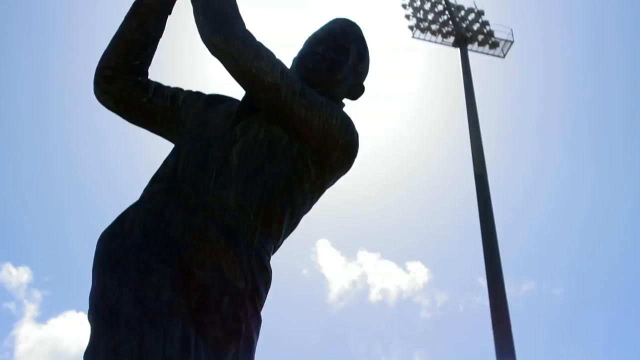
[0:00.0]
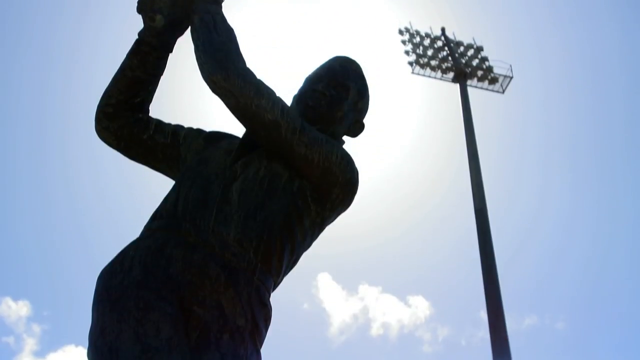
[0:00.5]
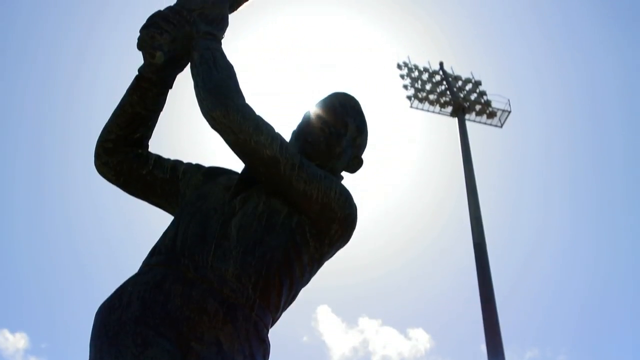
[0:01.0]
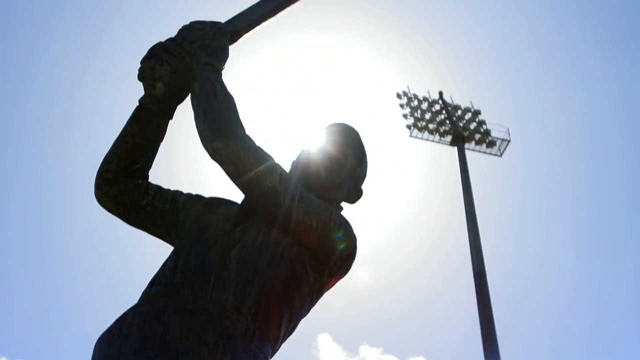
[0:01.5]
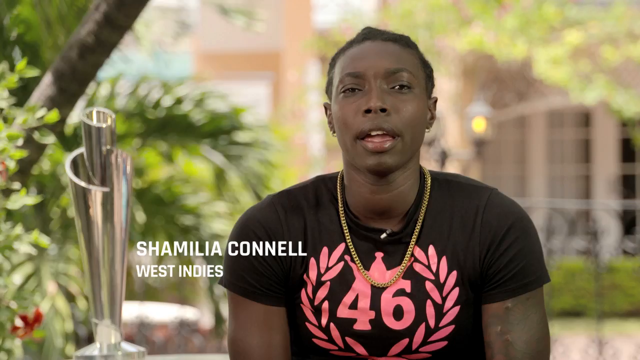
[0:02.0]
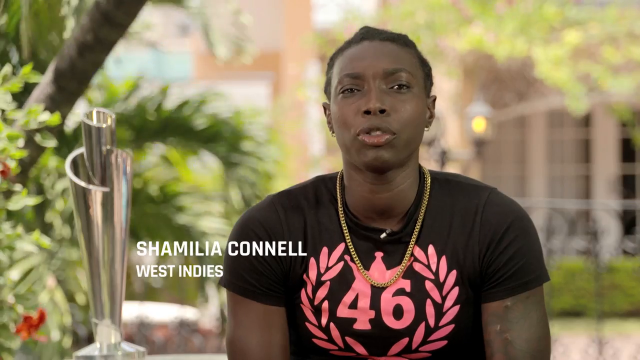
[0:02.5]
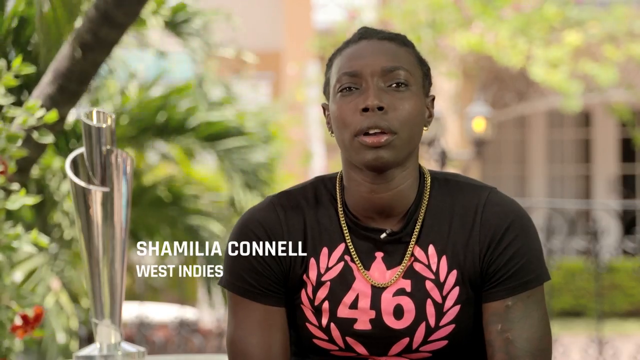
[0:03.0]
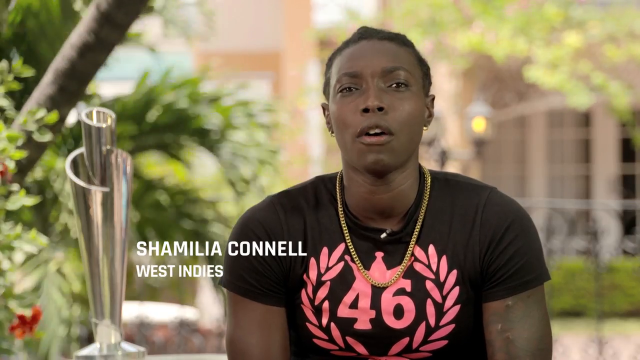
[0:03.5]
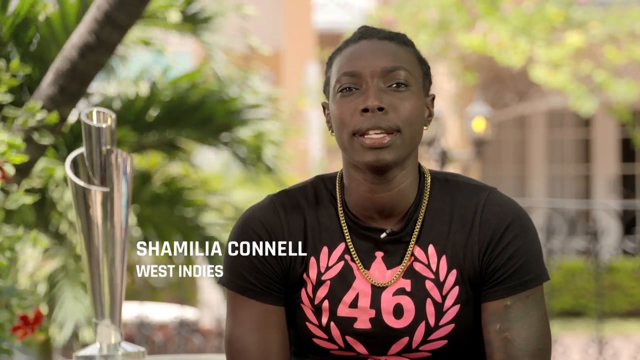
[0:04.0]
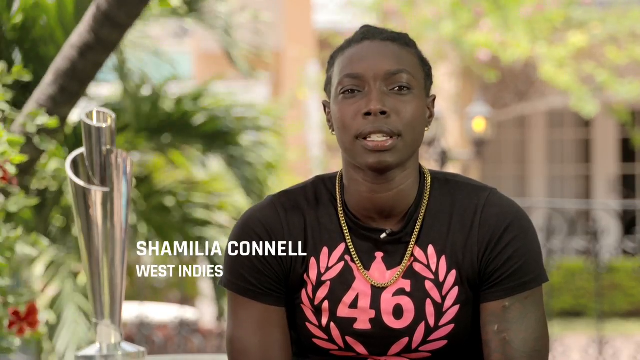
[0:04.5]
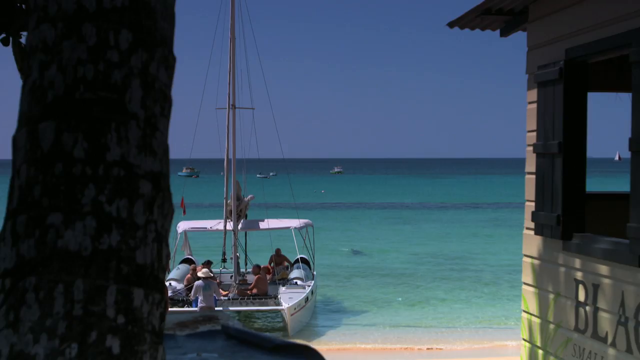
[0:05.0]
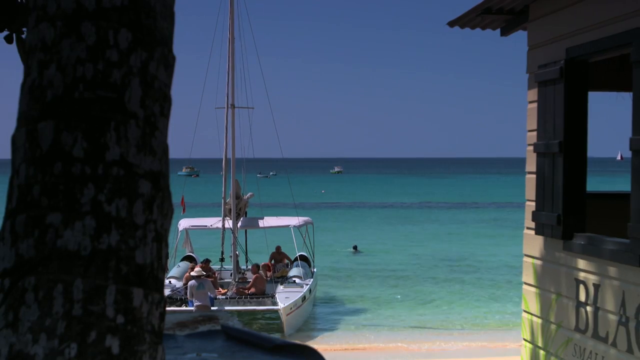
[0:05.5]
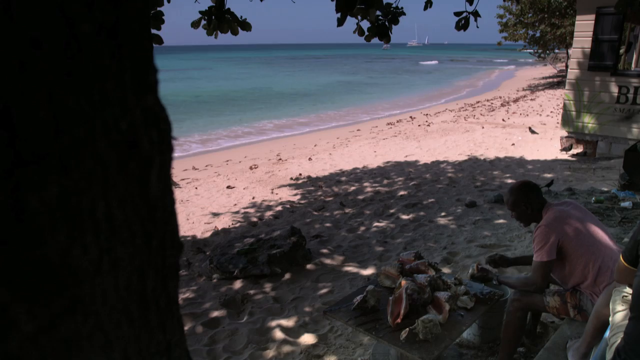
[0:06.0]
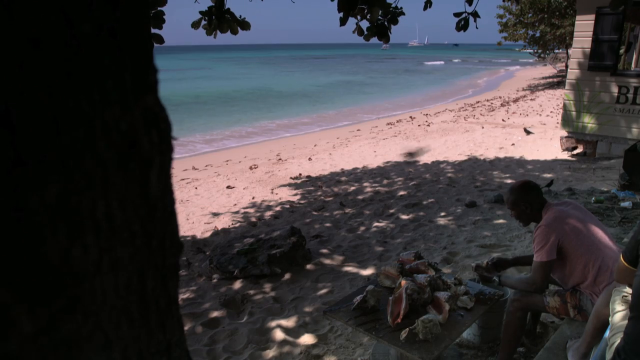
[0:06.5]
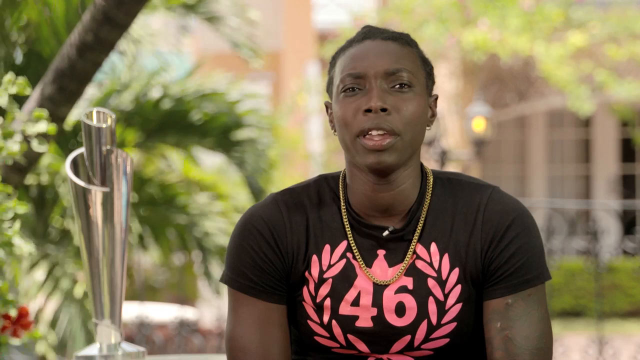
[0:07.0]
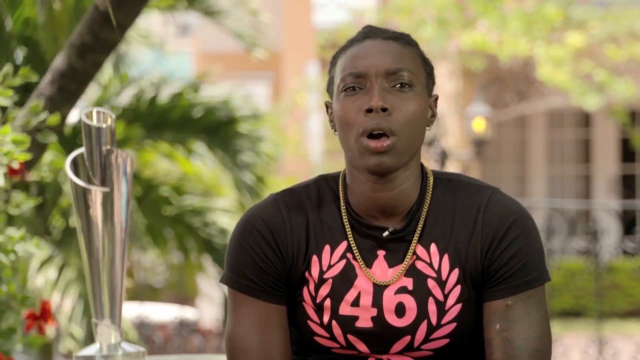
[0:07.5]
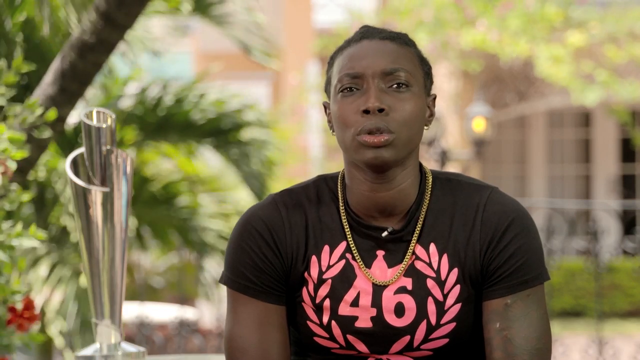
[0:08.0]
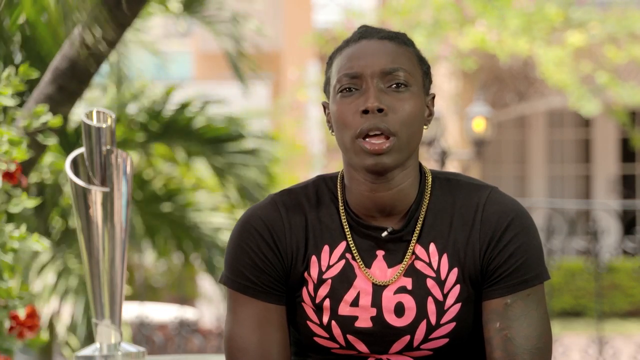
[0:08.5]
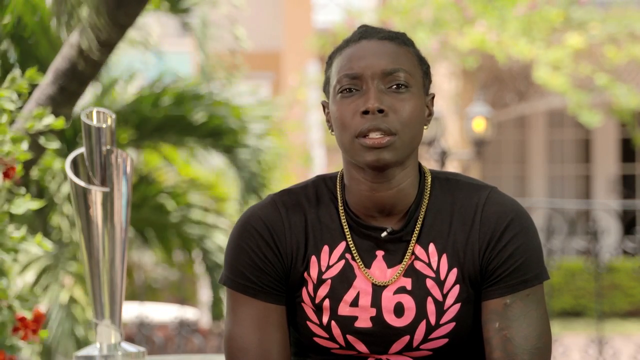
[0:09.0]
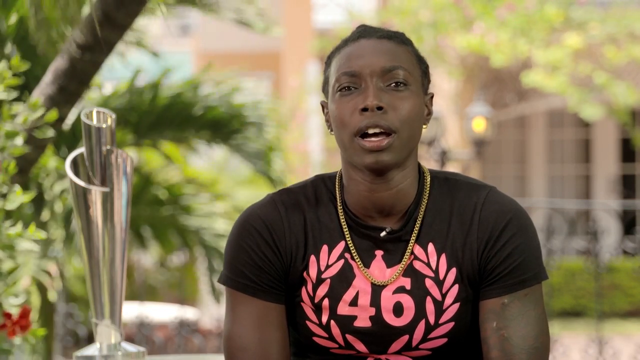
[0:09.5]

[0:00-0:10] A statue appears along with a very large light and cloudy skies with a lot of blue. The camera moves up as a very bright light shines on the statue. The video then cuts to a woman wearing a black t-shirt with the number 46 in red, and her name pops up: "Shamila Connell, West Indies." A trophy is on the left of her. Next comes a large body of blue, crystal clear water with a white boat with people on it, a tree to the left and a house to the right. A man sits going through some seashells, with a lot of sand surrounding him, some birds and some trees, and there is quite a lot of shade.